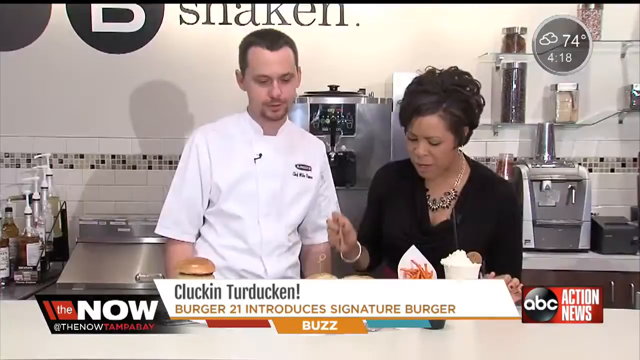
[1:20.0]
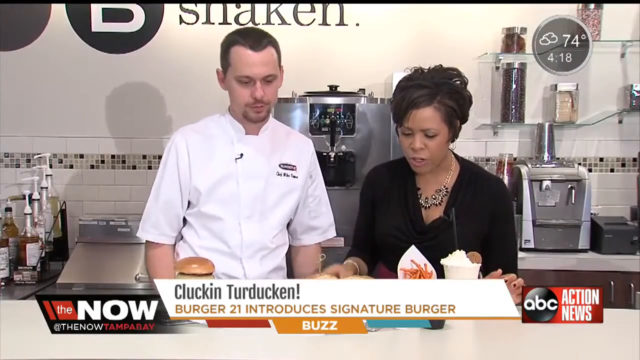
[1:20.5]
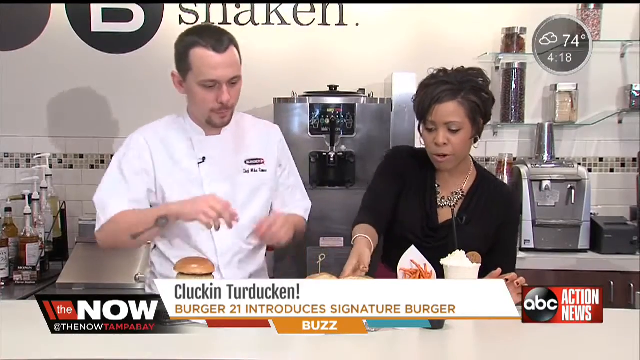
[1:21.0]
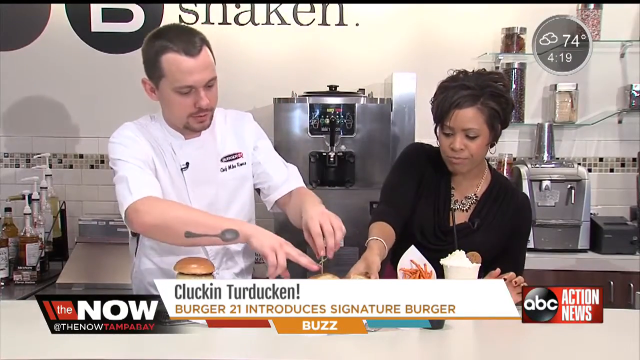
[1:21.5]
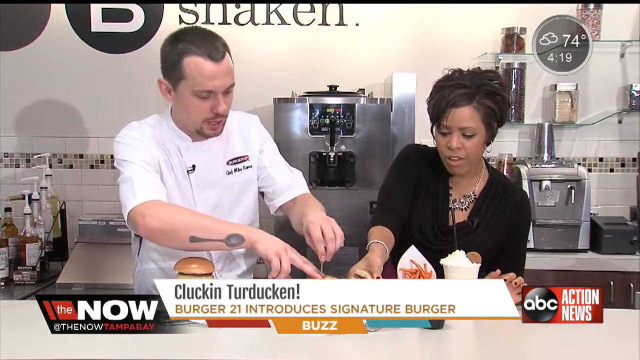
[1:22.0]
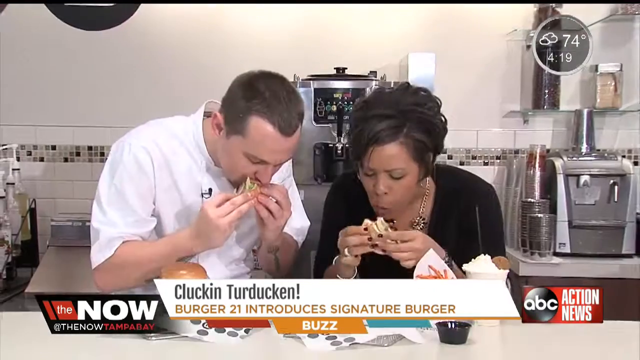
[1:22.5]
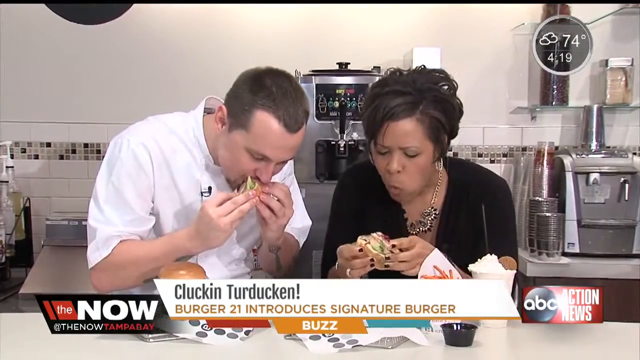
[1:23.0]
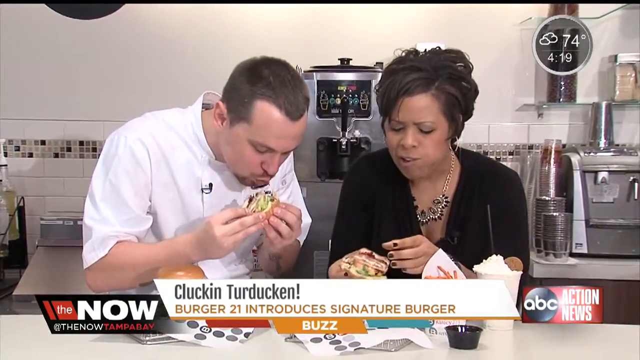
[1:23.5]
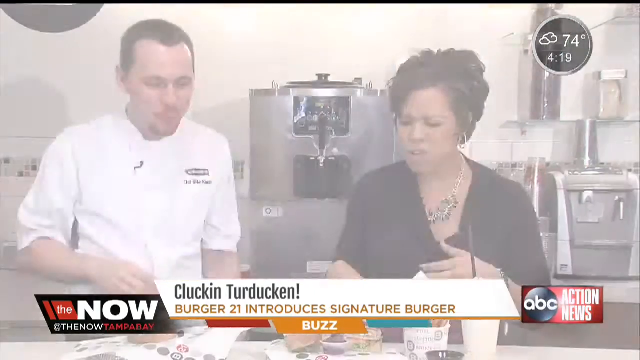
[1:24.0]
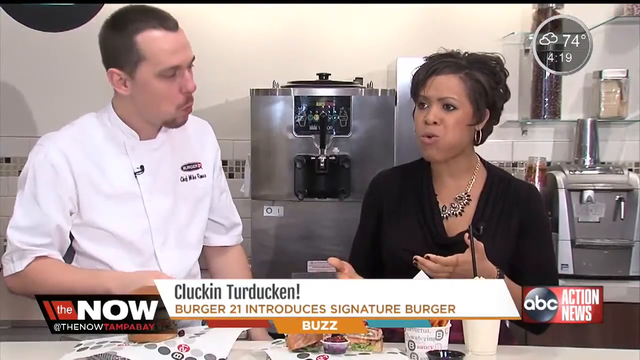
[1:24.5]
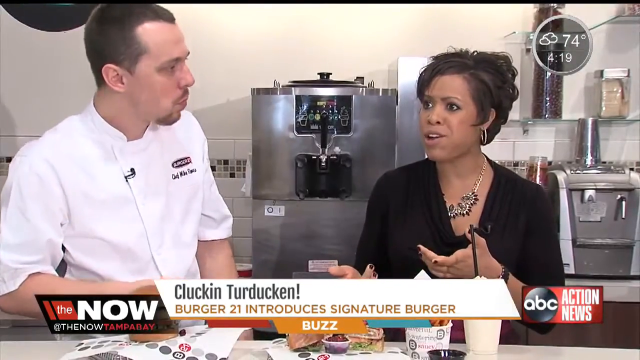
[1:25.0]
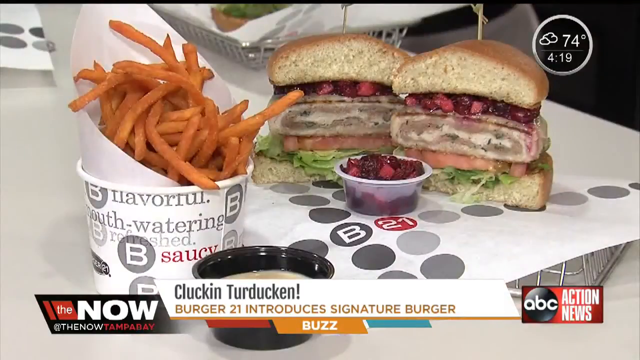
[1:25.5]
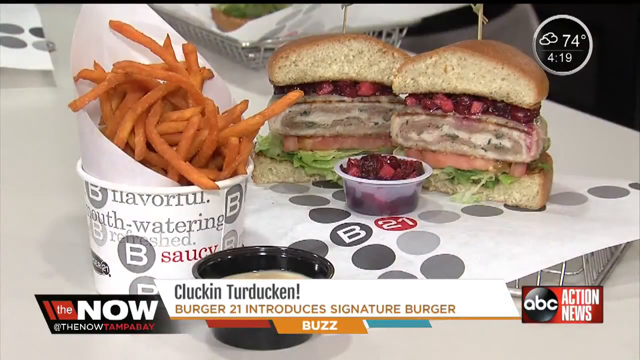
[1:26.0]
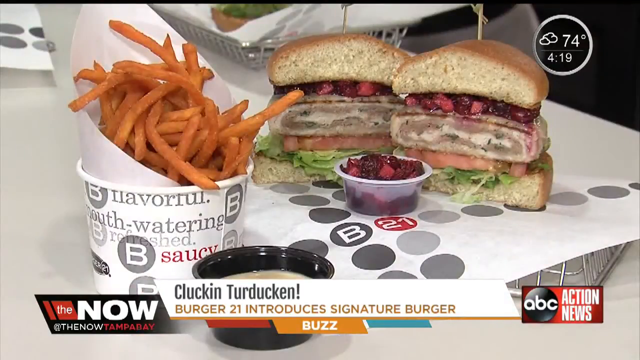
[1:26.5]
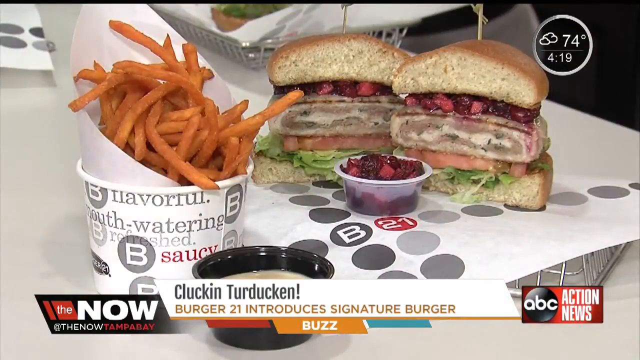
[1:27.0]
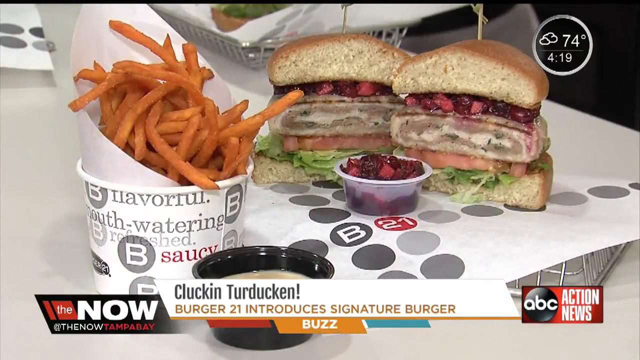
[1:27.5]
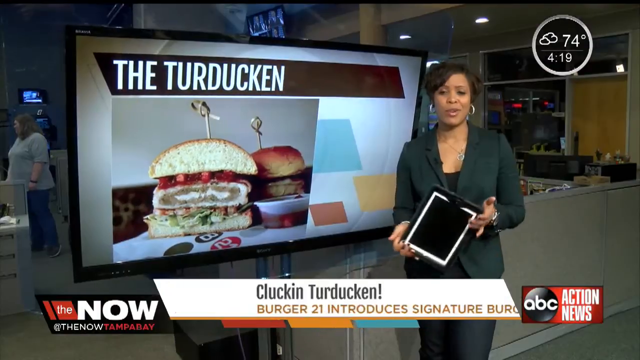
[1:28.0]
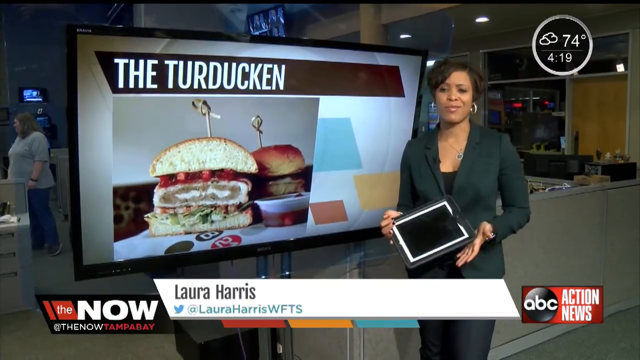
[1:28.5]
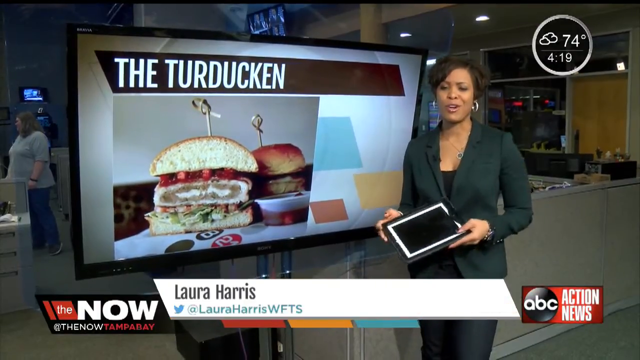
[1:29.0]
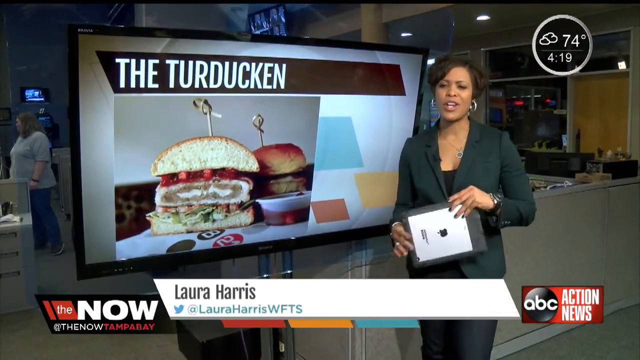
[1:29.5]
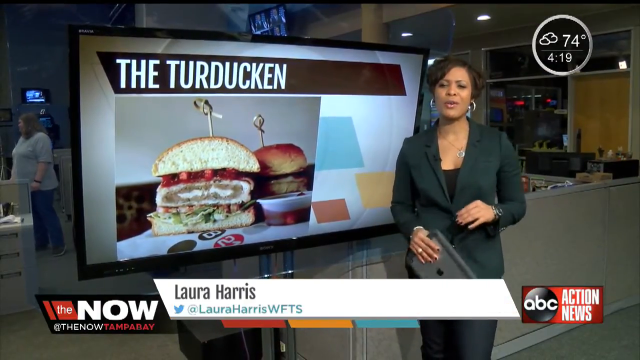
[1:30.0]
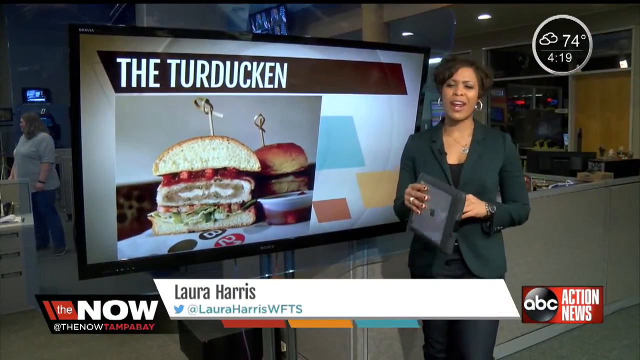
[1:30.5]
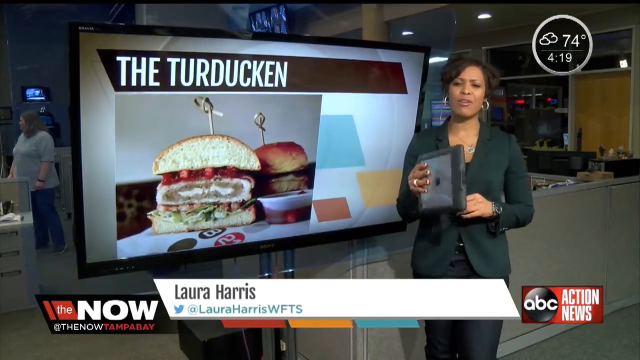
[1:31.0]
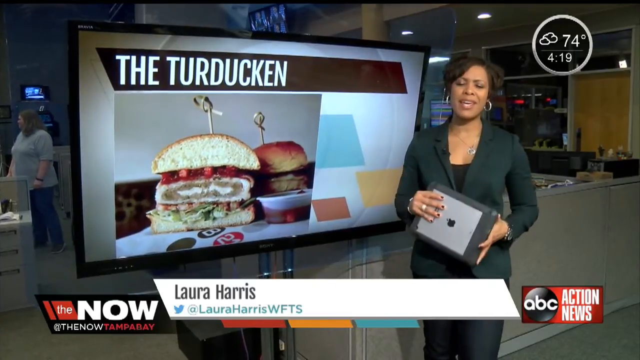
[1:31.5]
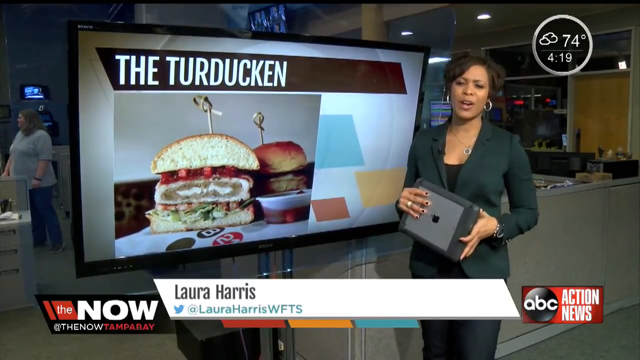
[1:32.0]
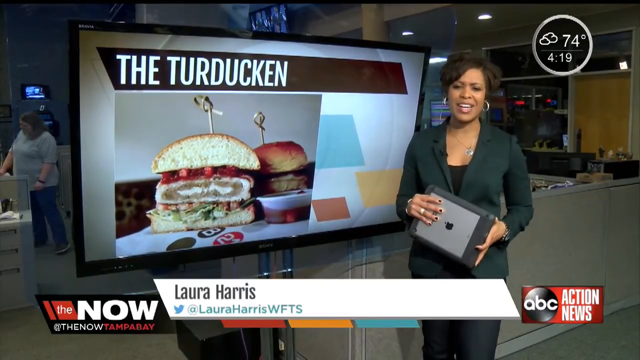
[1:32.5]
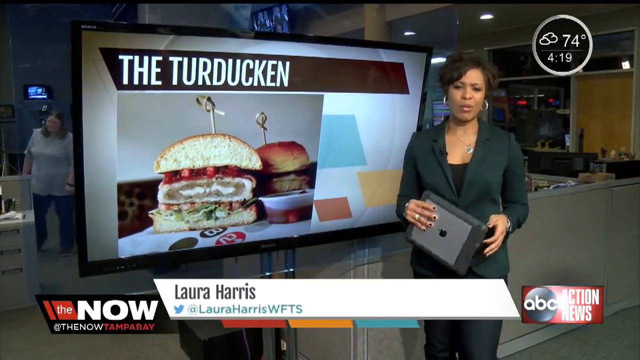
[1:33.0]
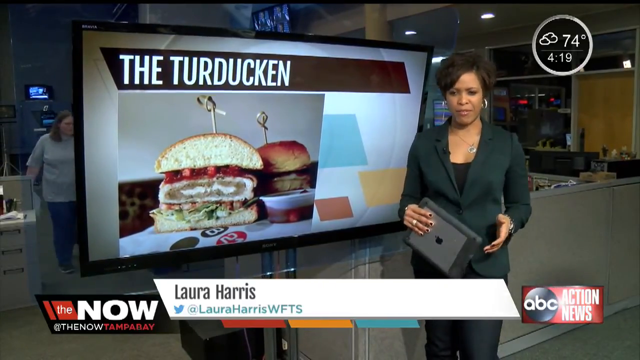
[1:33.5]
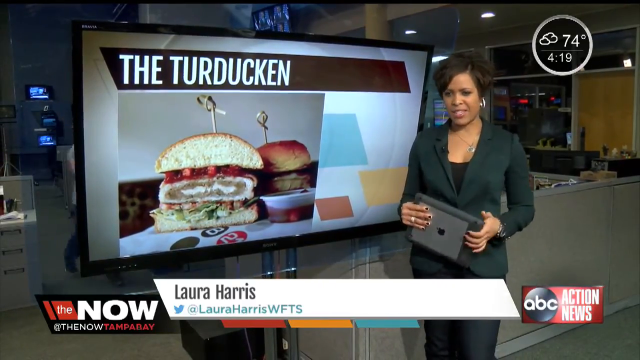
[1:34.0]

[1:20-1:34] The lady and the chef are still talking, and then they pick up the burgers and taste them. Both take big bites, chew and swallow, then look at each other to give feedback and have a conversation, probably about the taste of the burgers. The two burgers, the drinks and the sauce are then displayed. The scene moves to the newsroom, where a lady wears a green suit with a black vest underneath. She has black hair and large hoop earrings and holds a tablet in her hands. Behind her is a screen with "The Turducken" written at the top and, below it, a picture of the burgers and the bowl with the red contents. The news presenter's name is Laura Harris.